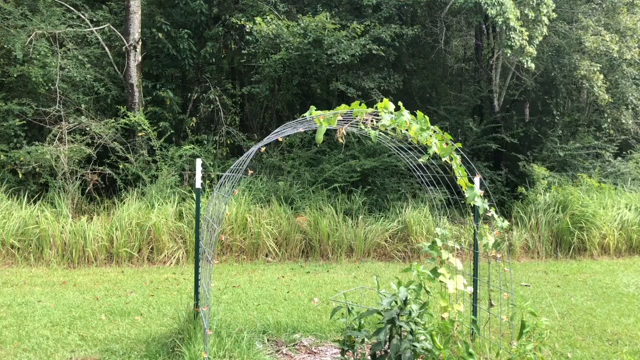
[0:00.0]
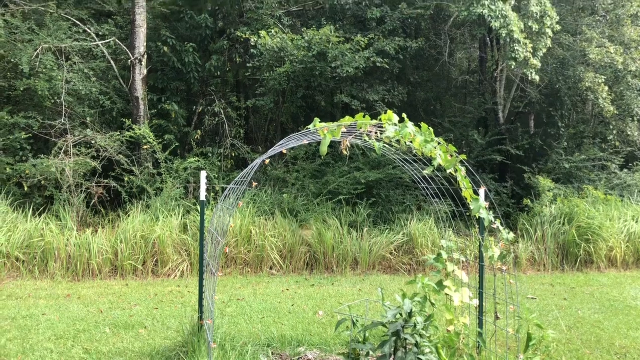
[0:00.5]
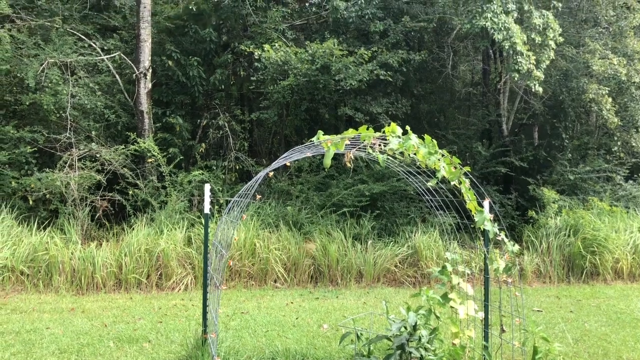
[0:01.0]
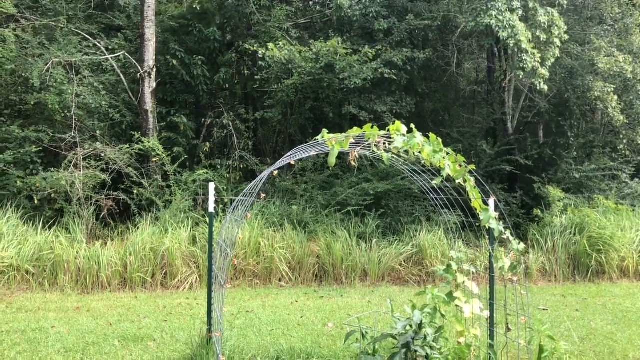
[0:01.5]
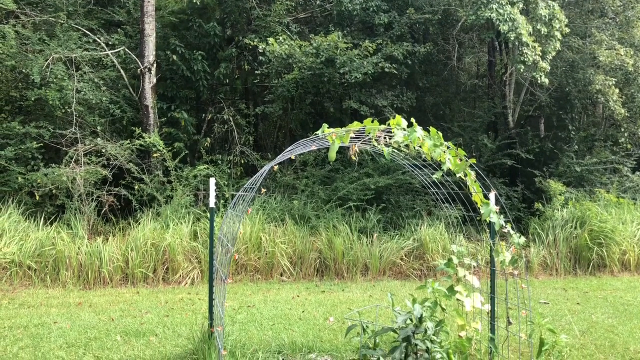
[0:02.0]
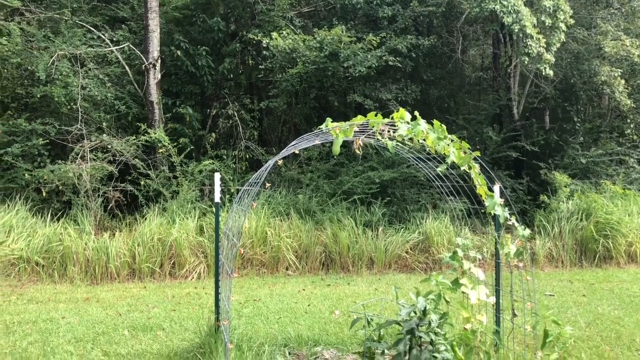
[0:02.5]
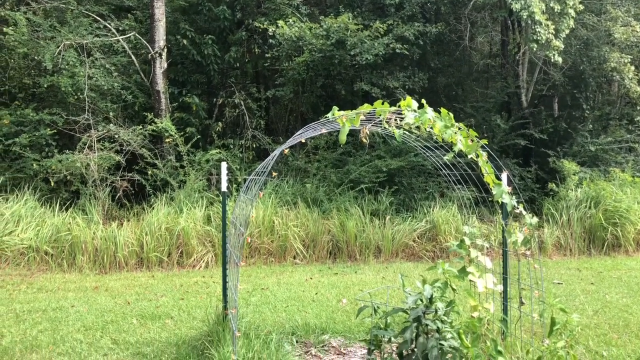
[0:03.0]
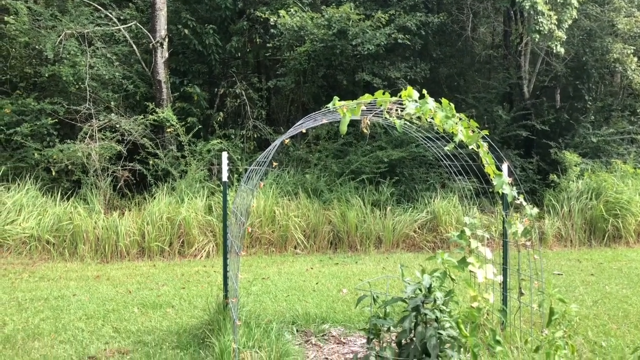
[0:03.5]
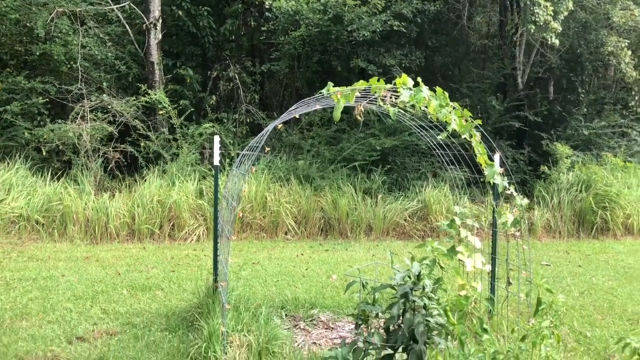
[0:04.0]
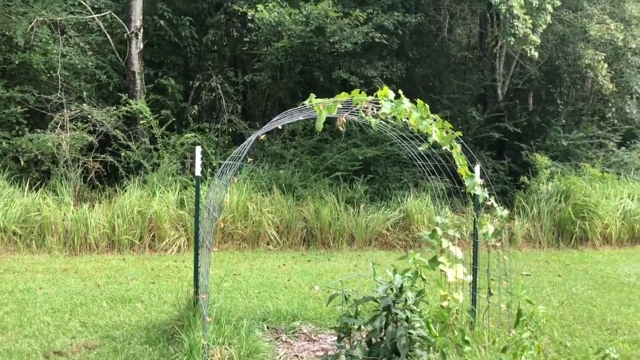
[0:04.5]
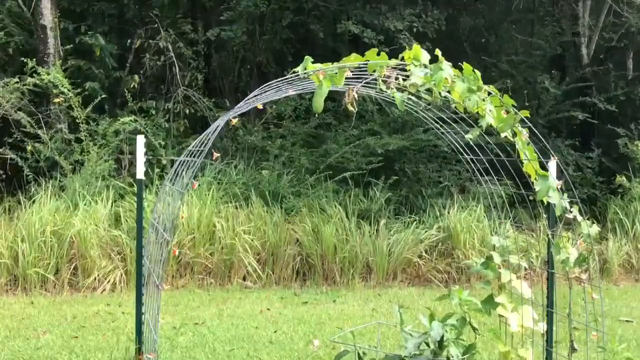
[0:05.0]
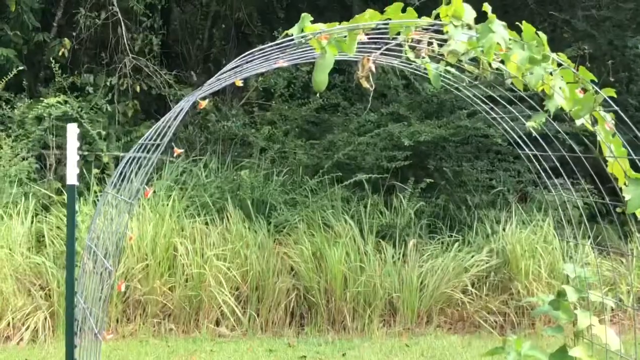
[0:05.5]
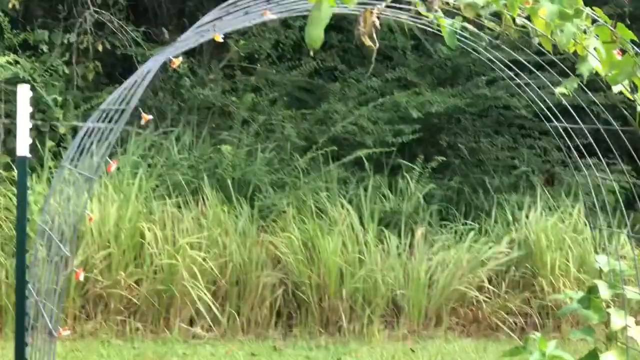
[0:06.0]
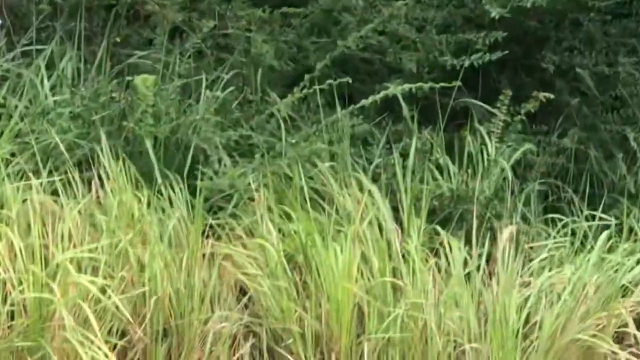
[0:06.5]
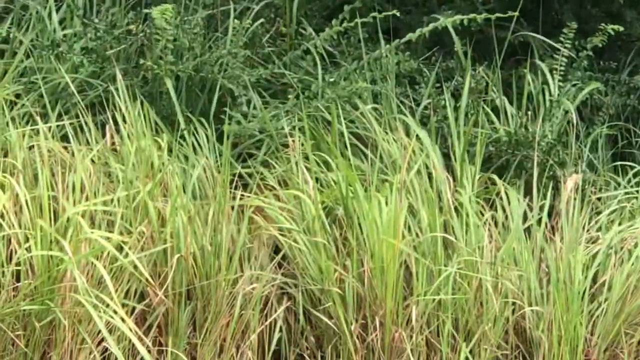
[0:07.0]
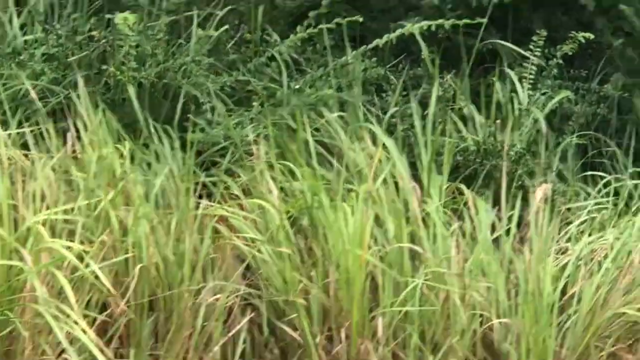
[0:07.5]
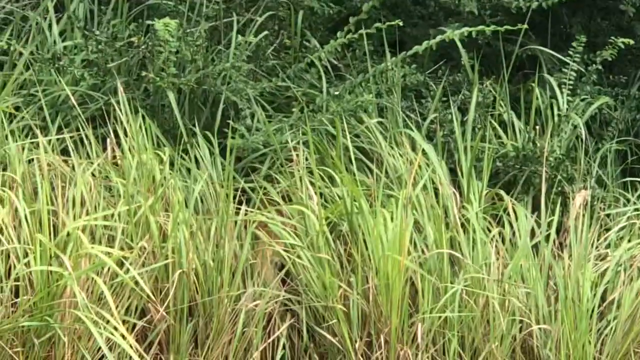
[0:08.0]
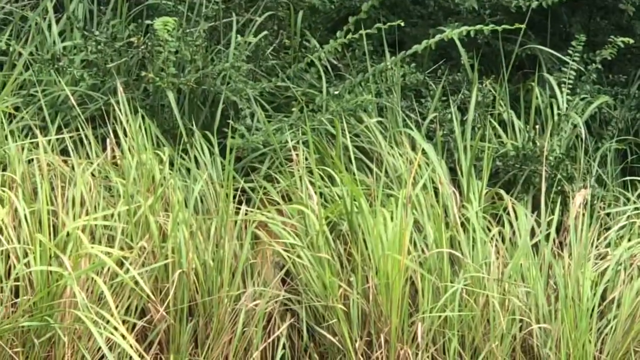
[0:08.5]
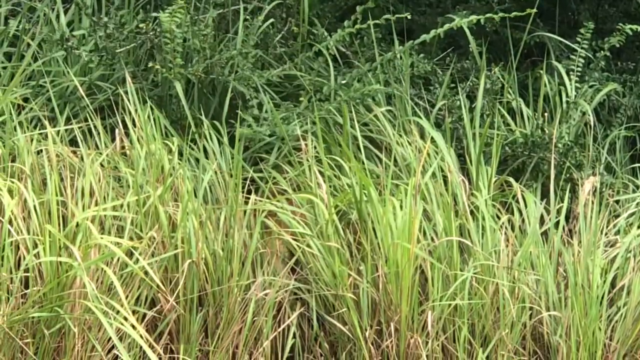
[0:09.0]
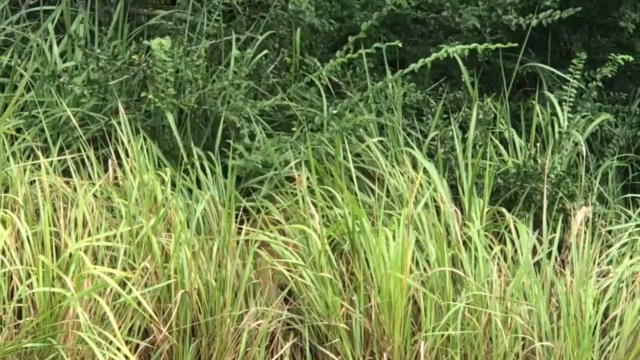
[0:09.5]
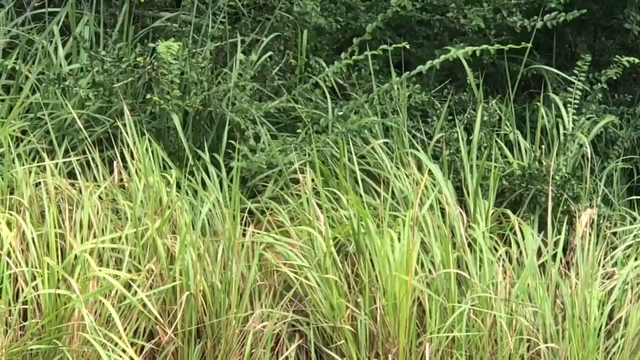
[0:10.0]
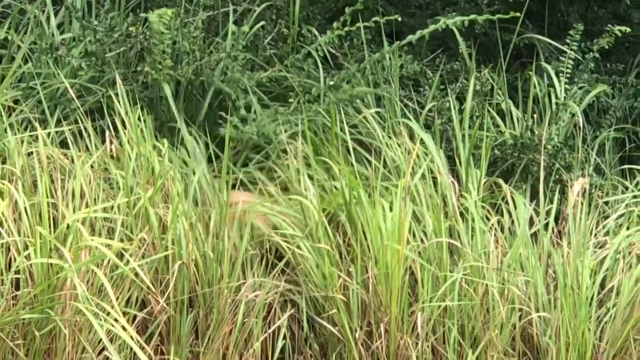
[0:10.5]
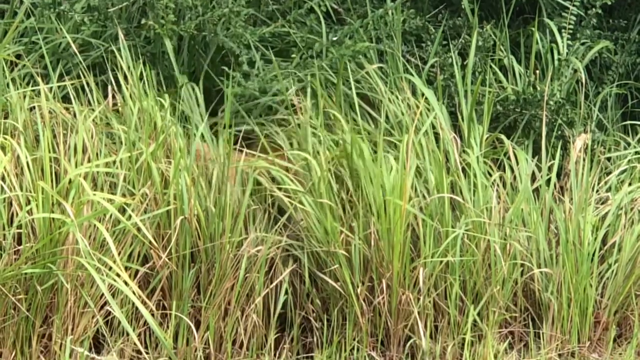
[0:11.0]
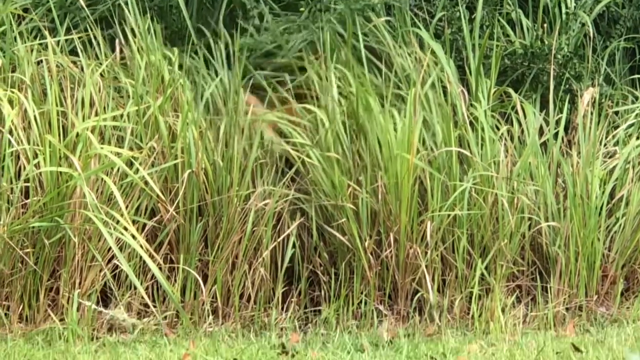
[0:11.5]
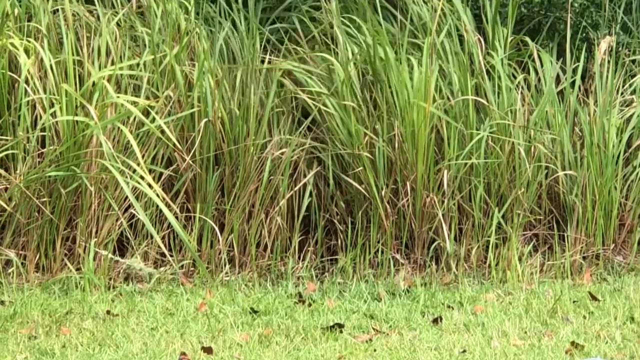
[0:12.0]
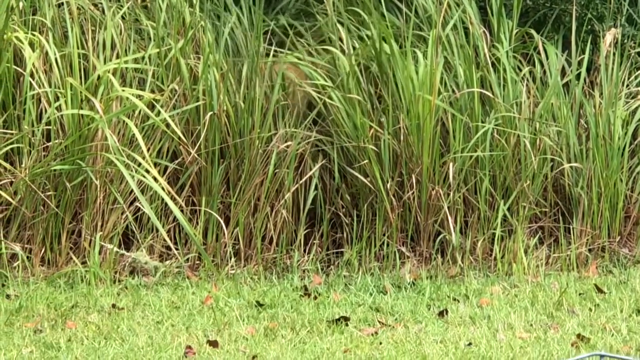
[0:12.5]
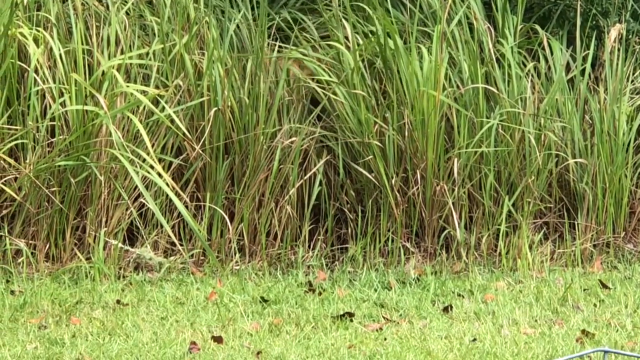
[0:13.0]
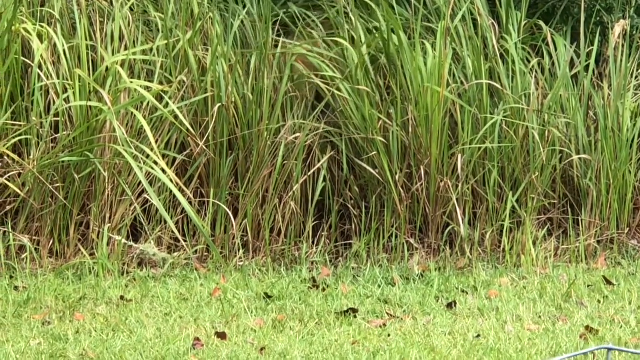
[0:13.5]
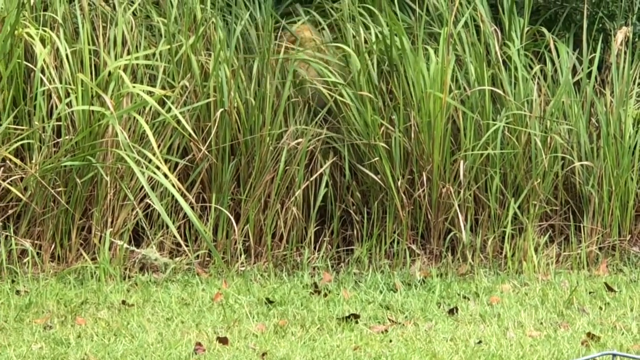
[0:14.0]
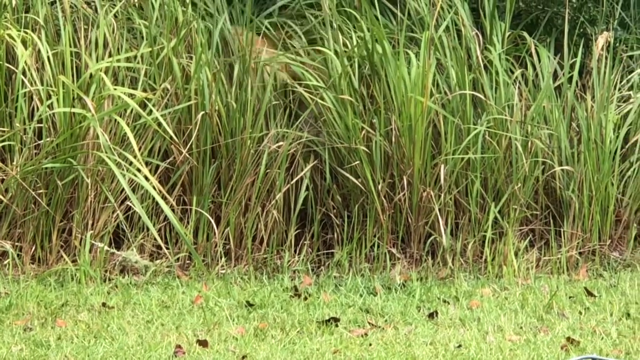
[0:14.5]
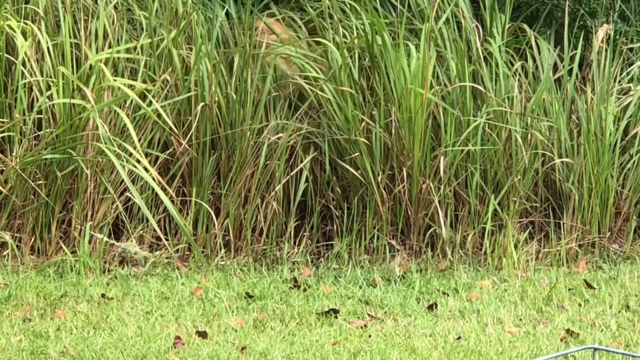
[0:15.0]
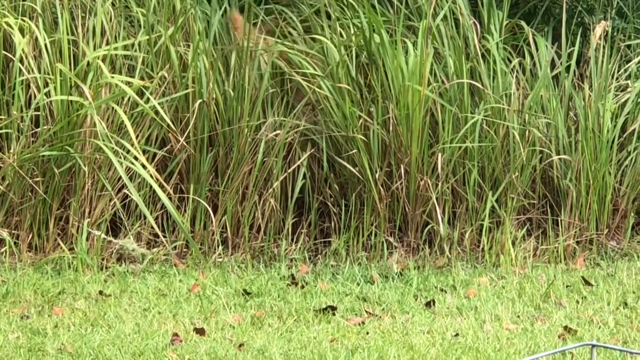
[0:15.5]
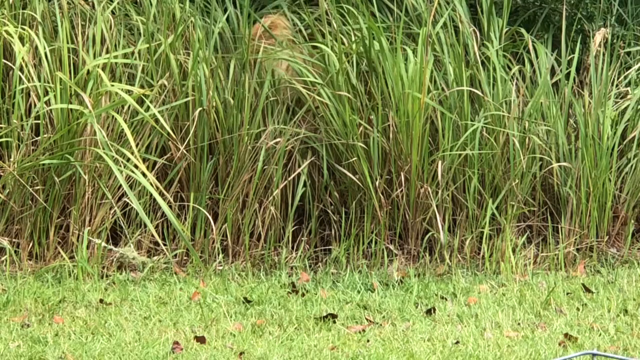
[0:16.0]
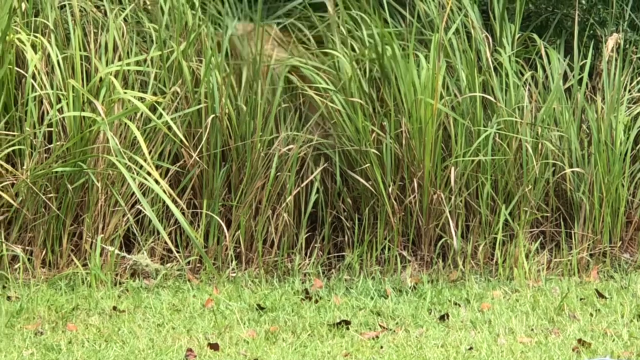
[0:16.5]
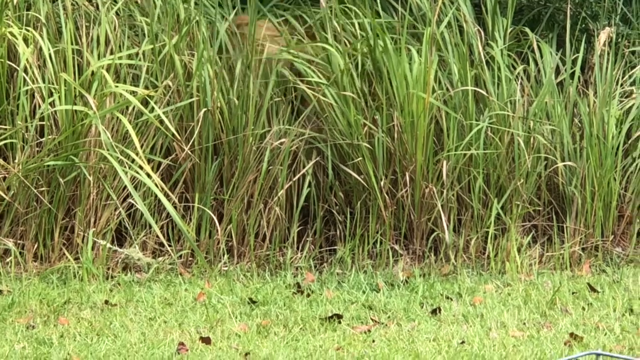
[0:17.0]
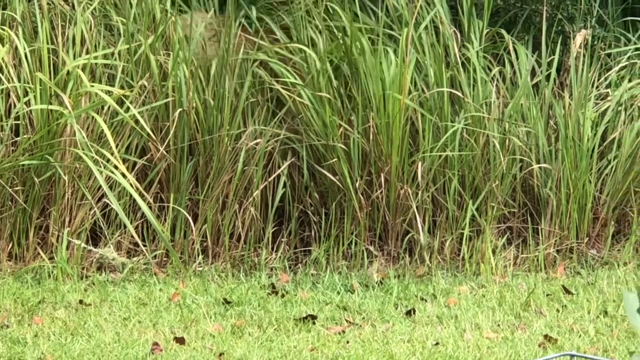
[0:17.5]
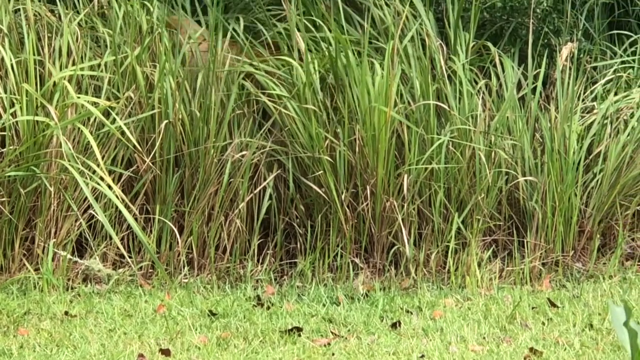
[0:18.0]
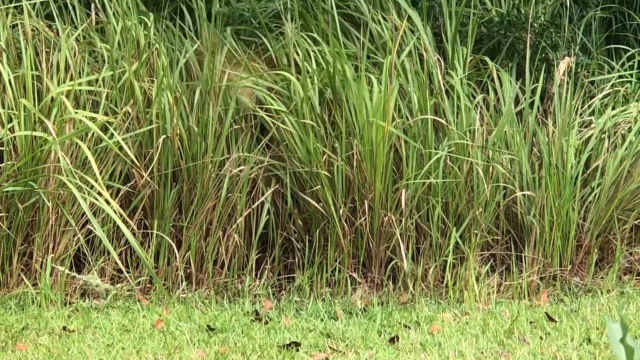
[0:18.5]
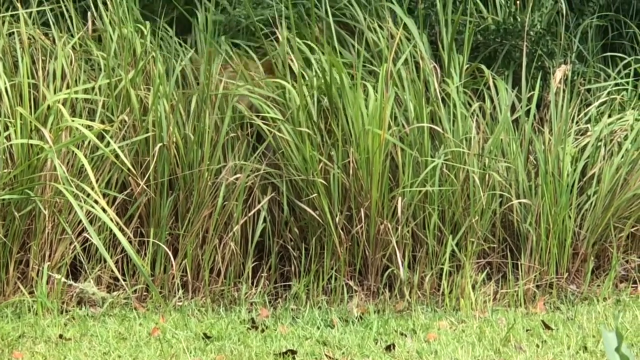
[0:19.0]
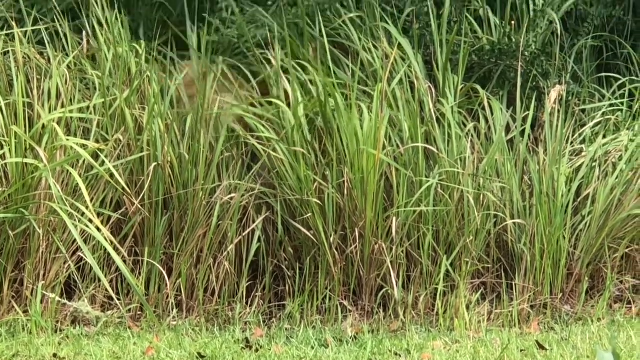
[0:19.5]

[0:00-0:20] A clear mountain is shown. In the background are trees that can lead to a forest, with long grassland along the edge of this forest, while the rest is short grassland. In the center of the screen is a kind of device: a kind of curved wire in the shape of an N, with some plants growing around the wires. It is possibly a device or technology for growing these plants, which grow differently from the others. The camera approaches the long grassland at the edge of the forest, where something is moving behind it. It seems to be the tail of an animal moving from left to right, shaking the green grass stems a little. What it is is not yet clear, but judging by the height, color and shape of the tail, it may be a dog, like a Golden Retriever.